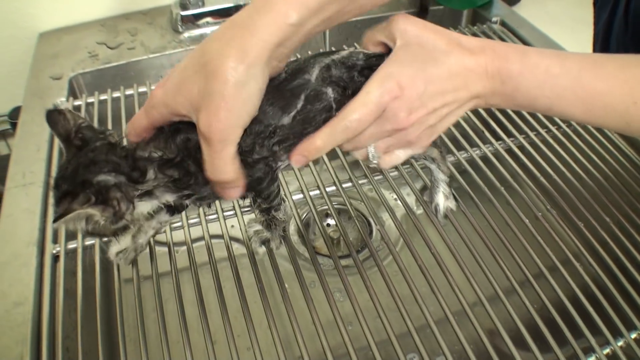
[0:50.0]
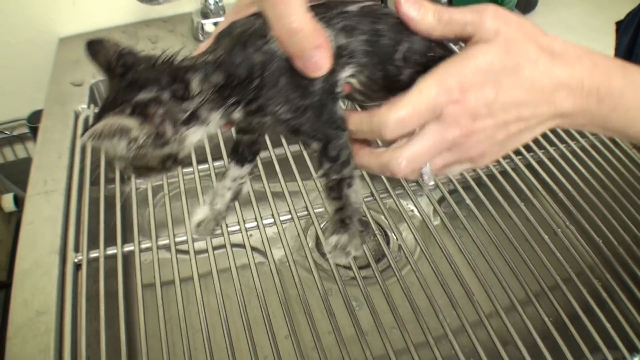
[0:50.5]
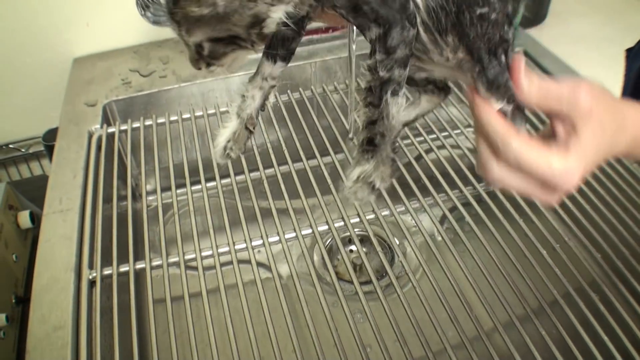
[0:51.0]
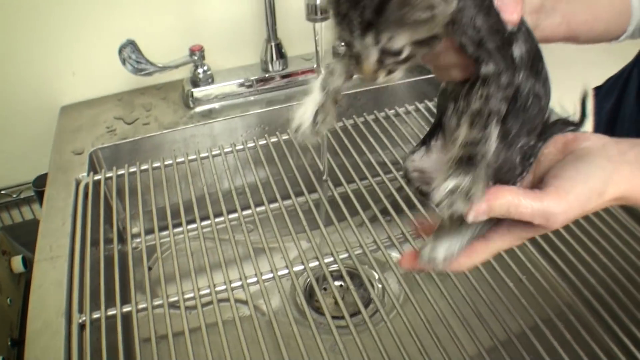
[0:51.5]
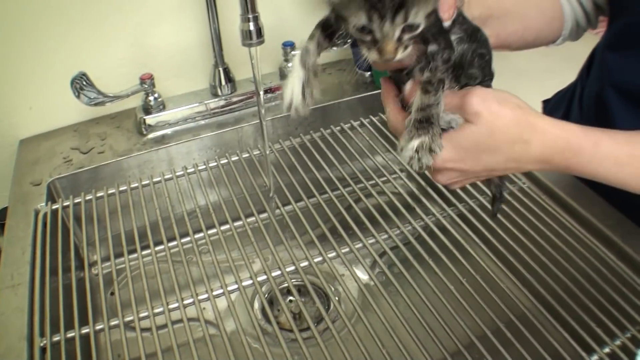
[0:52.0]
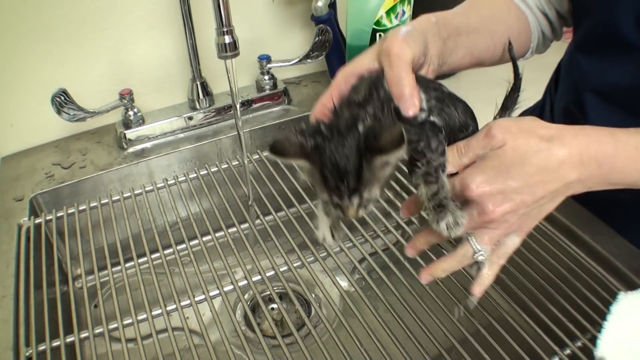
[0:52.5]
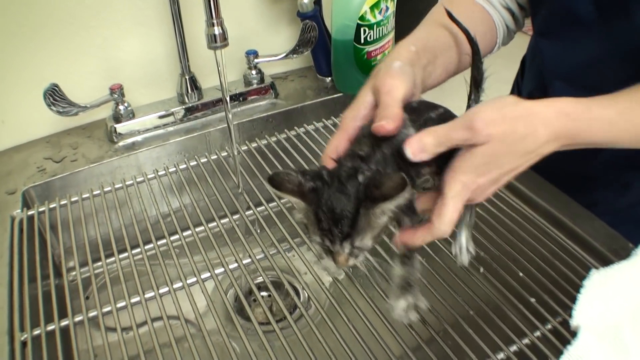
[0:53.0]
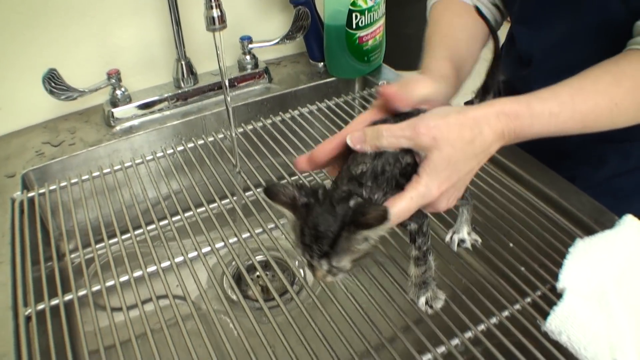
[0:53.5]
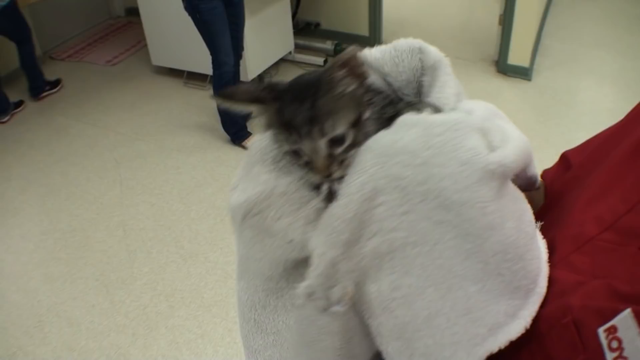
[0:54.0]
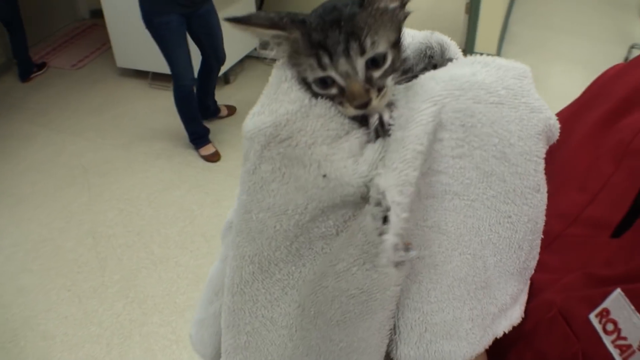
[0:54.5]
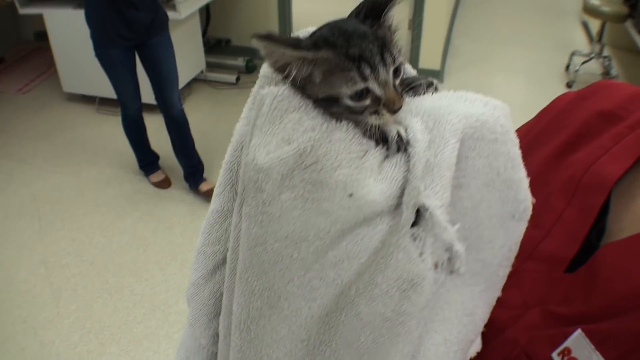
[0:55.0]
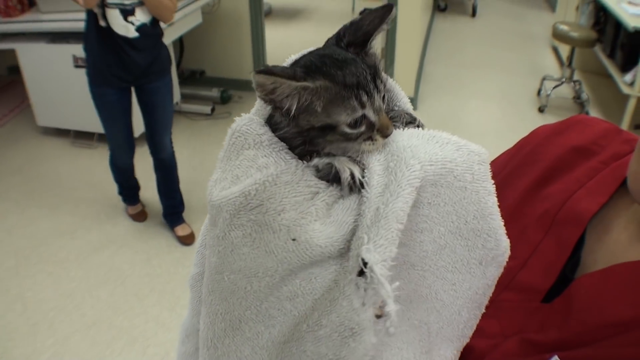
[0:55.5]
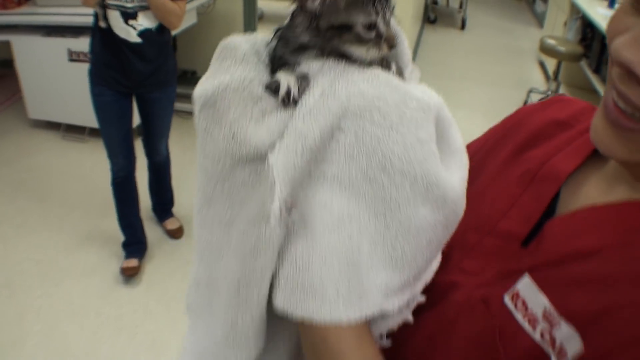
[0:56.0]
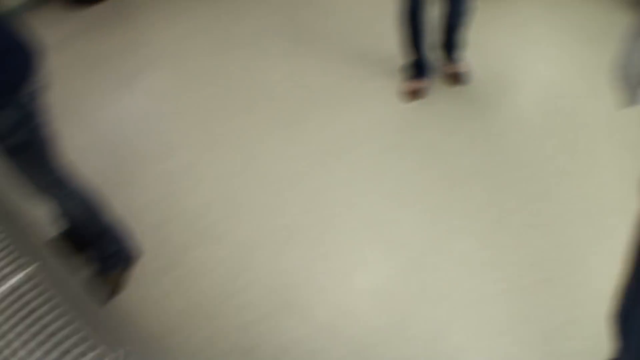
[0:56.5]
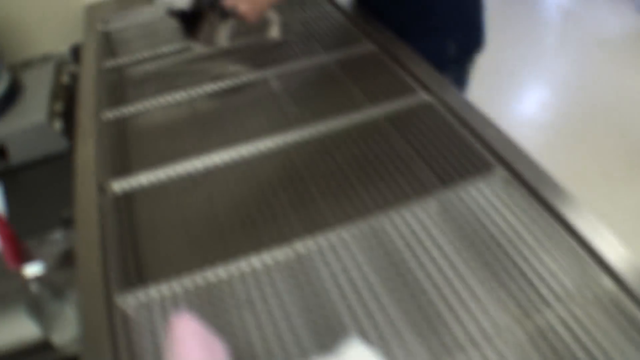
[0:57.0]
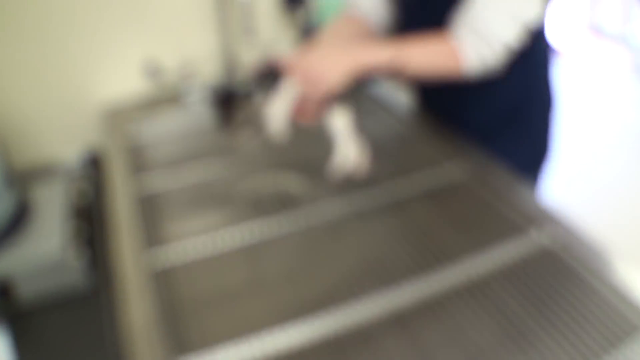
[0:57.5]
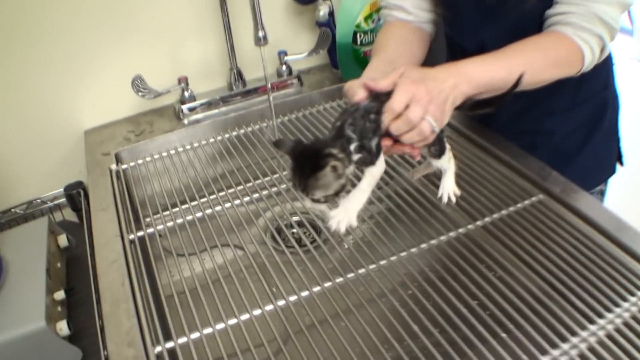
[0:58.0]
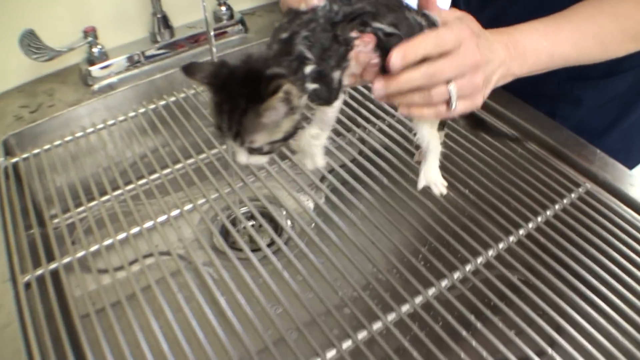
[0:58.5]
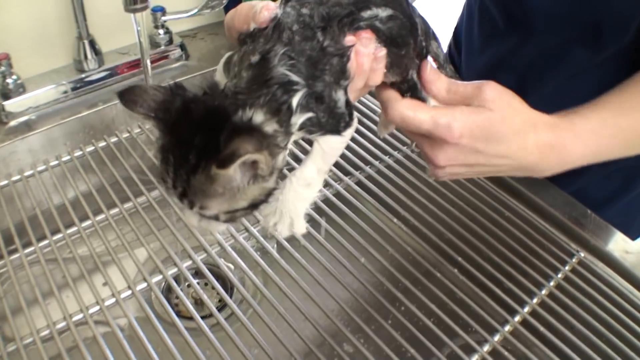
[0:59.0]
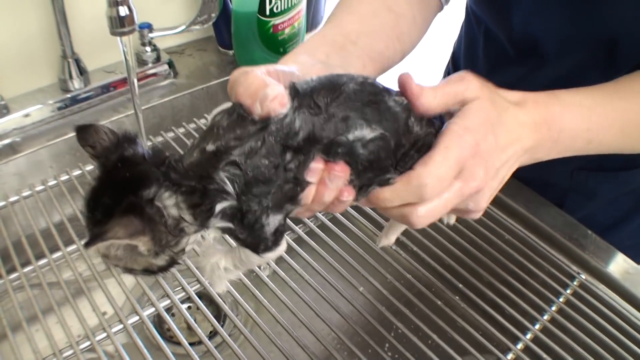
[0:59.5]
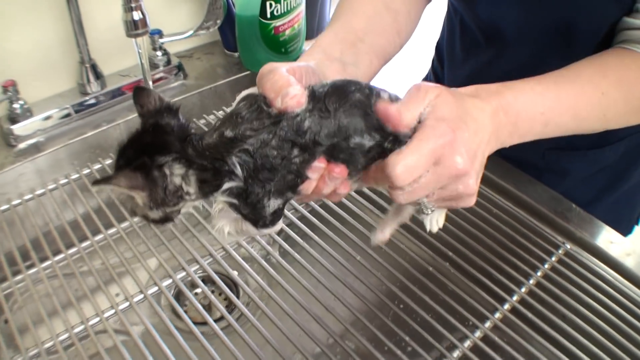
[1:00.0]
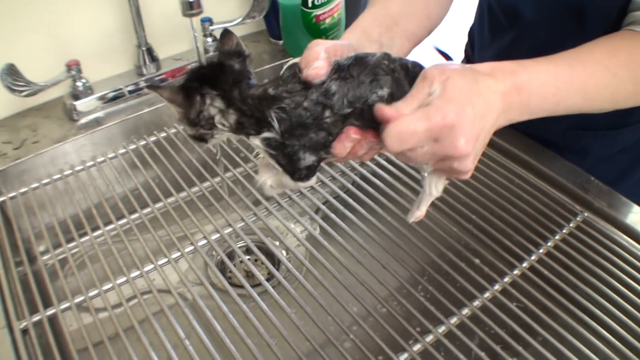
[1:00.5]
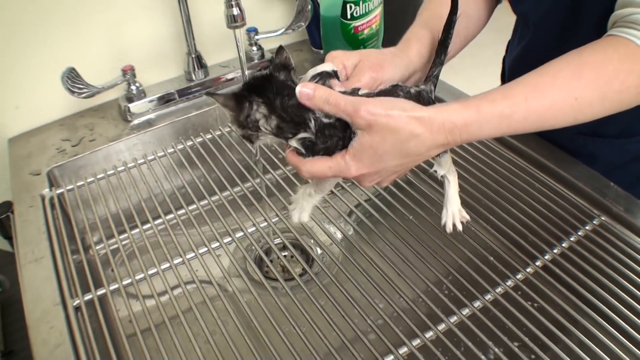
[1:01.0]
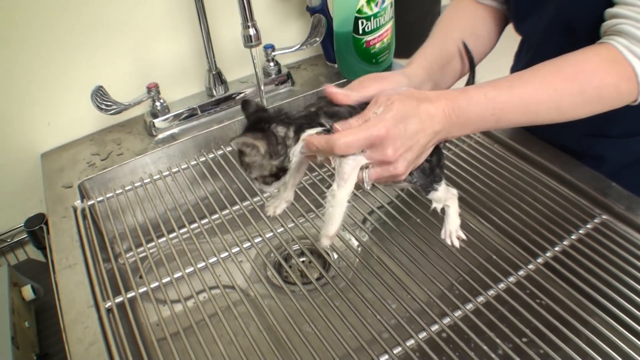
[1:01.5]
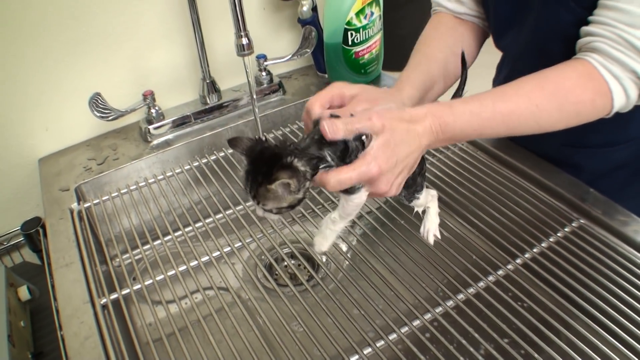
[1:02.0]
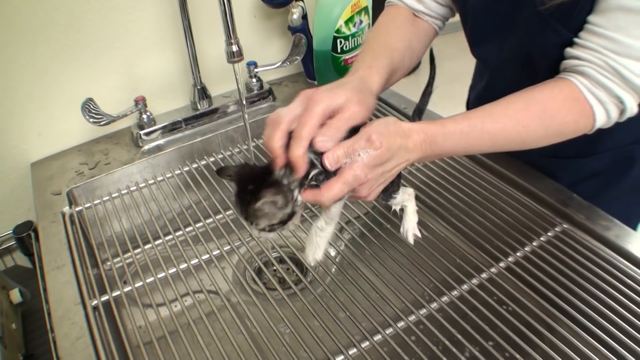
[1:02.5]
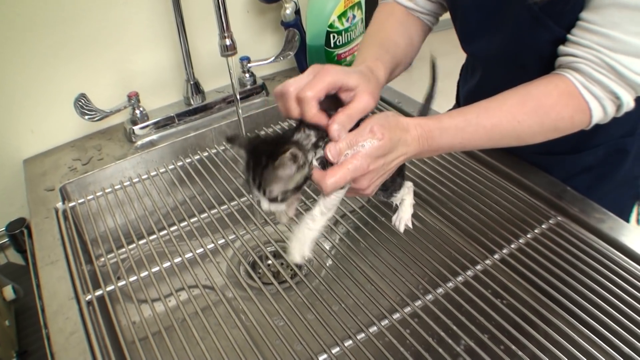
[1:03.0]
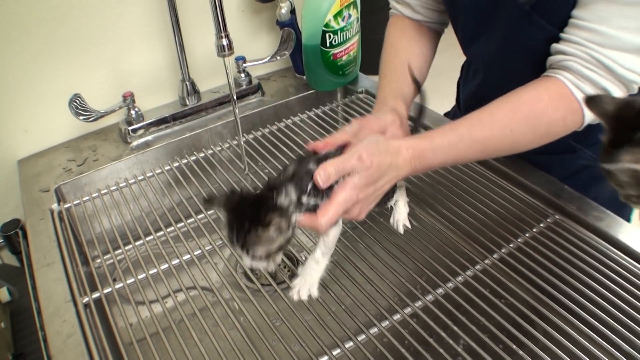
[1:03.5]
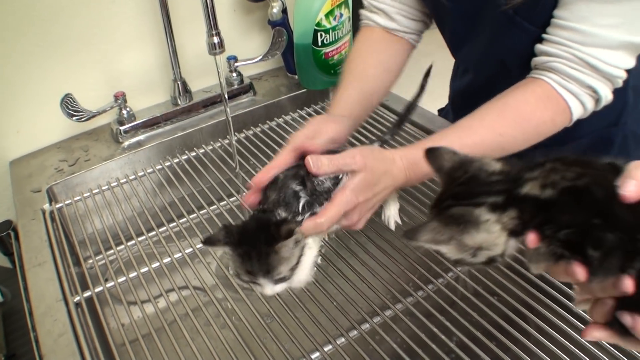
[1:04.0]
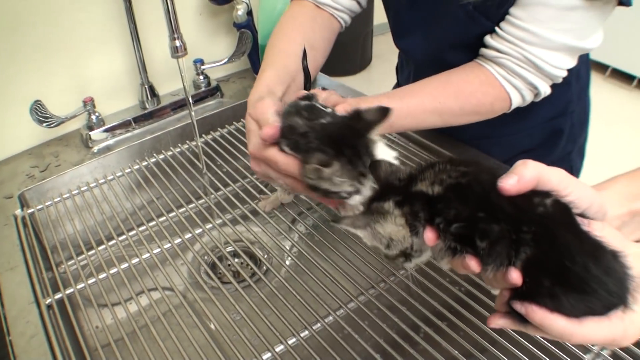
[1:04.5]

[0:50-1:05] At the vet ranch, the kittens have just finished the medicine they got through the syringe and are now getting their baths. Some try to walk off the table, while the one guy is still giving medicine. One little cat is being washed over to the side. More people have joined in the room, and the man can be seen talking to them. The kittens look like they are getting sleepy. One kitten getting his bath is lathered up. Someone puts one kitten in a towel, the first one to be dried off. Another little one, black striped with a little round dot on his neck, is dried off in a white towel. Then a new one with a little M on his face gets water on him, and there are fleas all over his white belly.